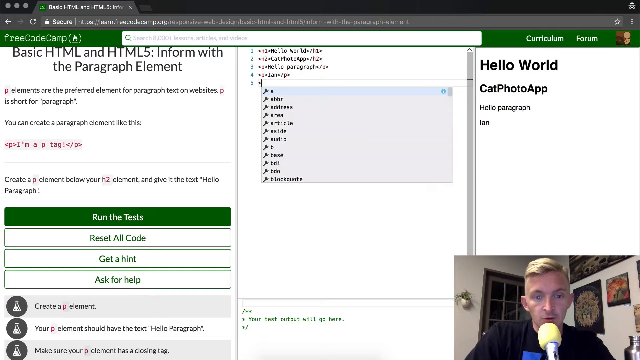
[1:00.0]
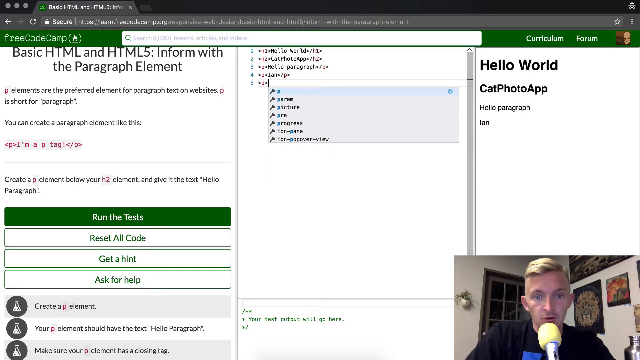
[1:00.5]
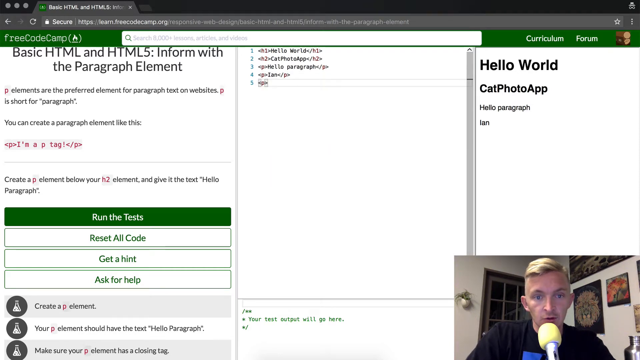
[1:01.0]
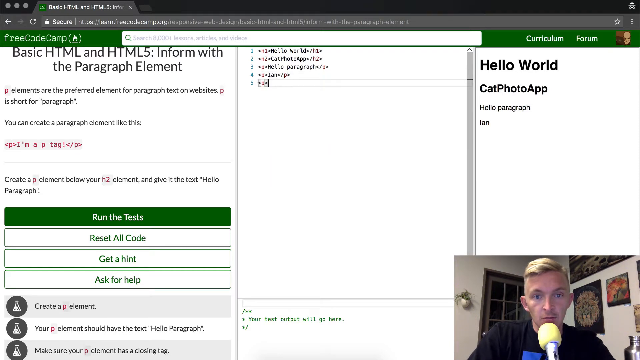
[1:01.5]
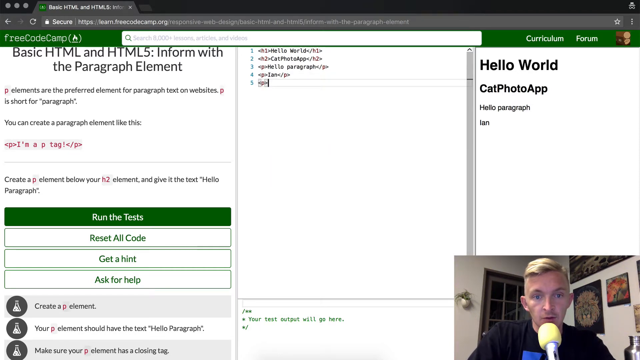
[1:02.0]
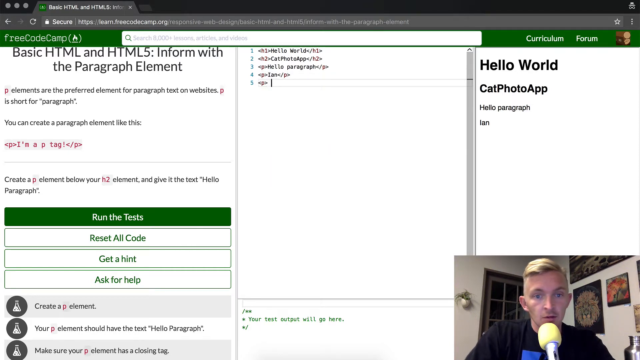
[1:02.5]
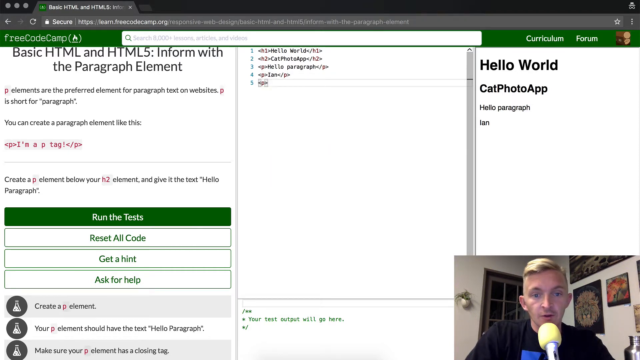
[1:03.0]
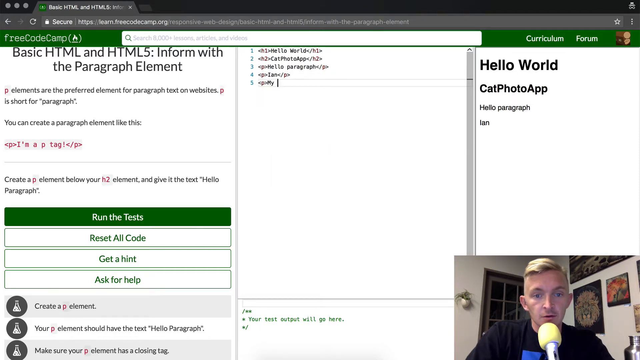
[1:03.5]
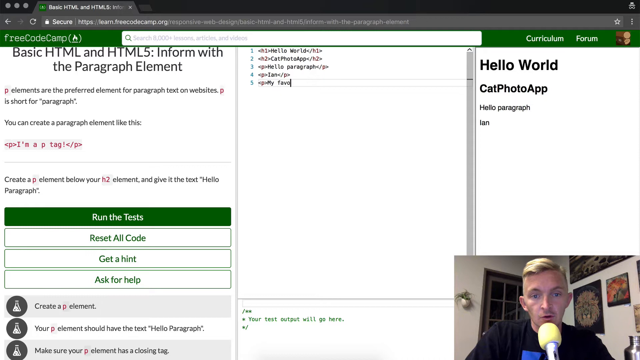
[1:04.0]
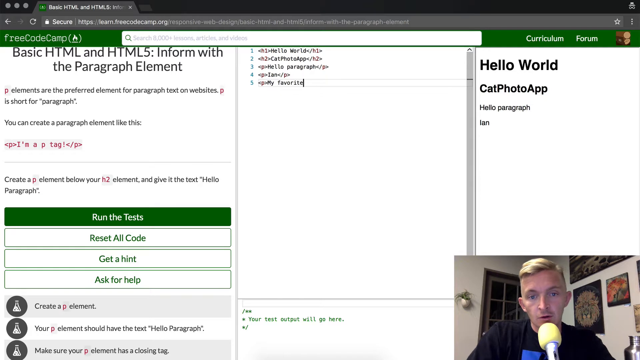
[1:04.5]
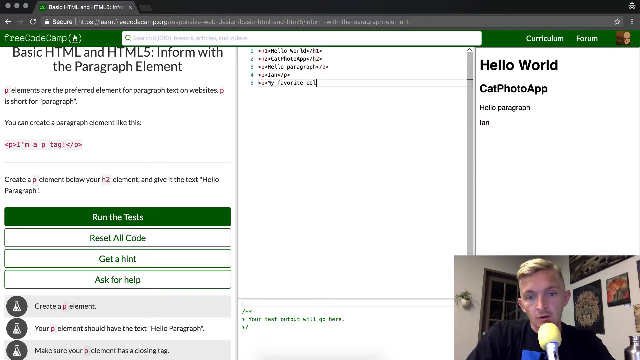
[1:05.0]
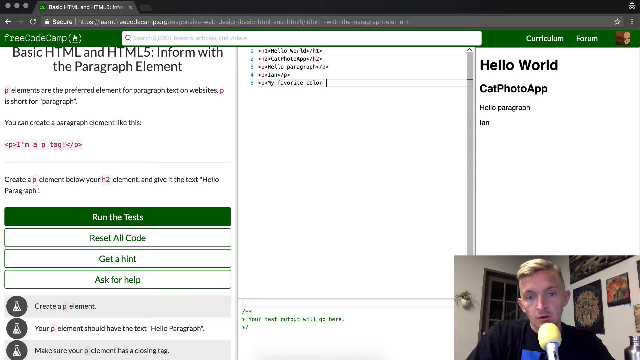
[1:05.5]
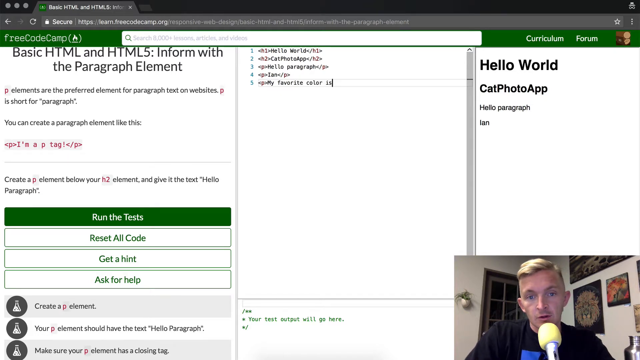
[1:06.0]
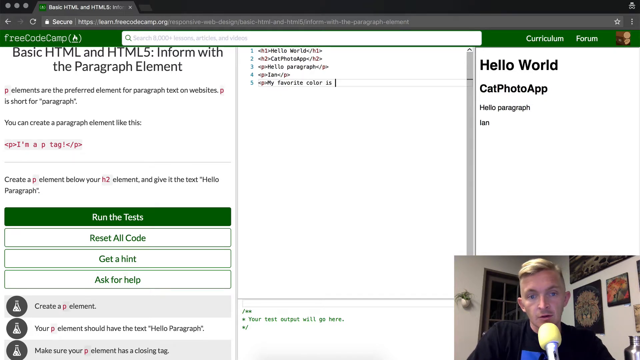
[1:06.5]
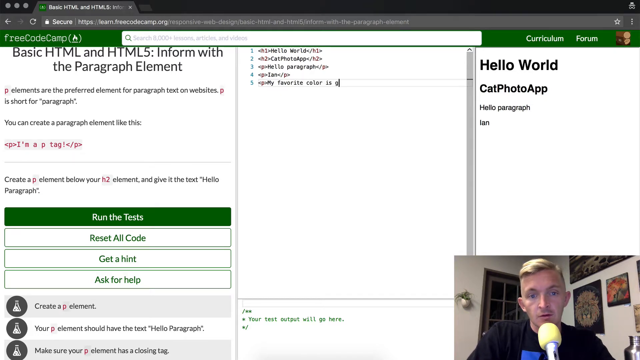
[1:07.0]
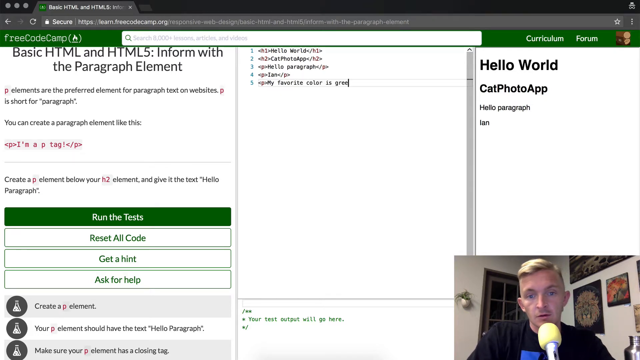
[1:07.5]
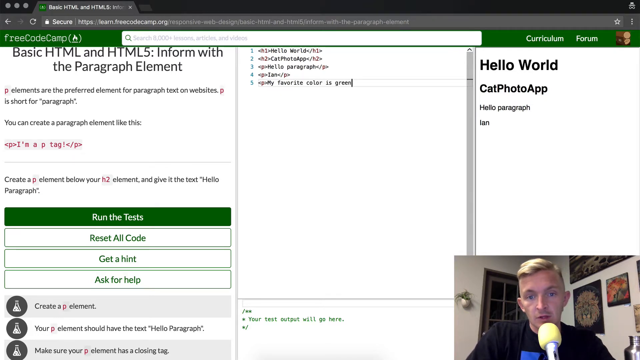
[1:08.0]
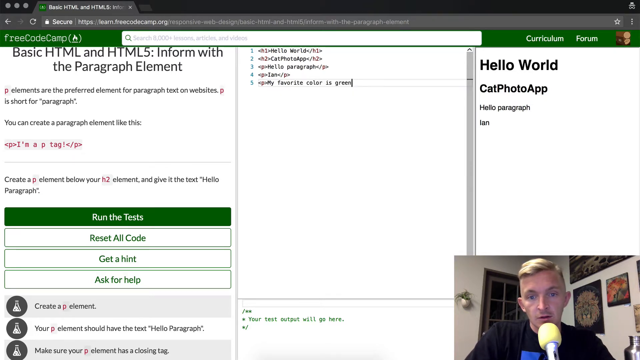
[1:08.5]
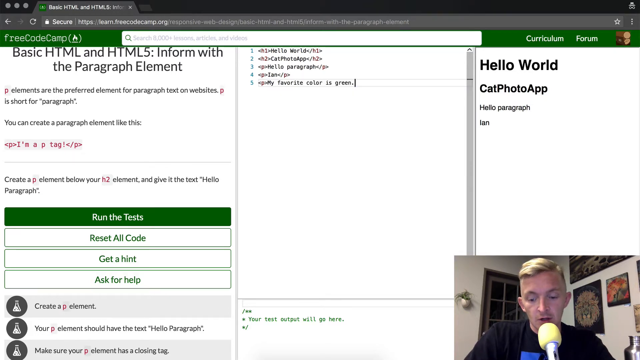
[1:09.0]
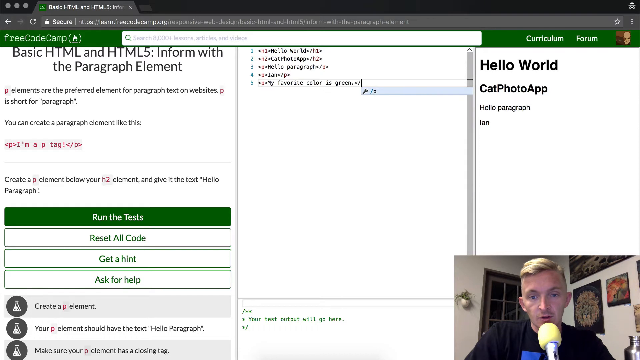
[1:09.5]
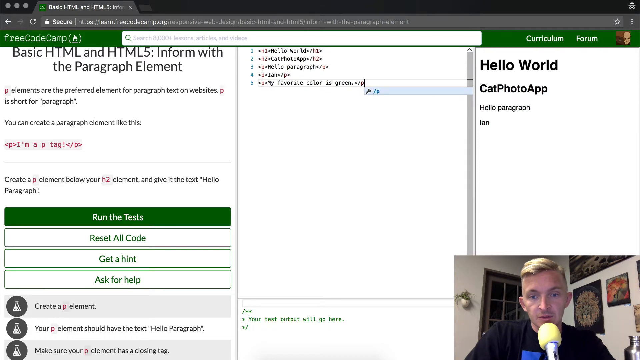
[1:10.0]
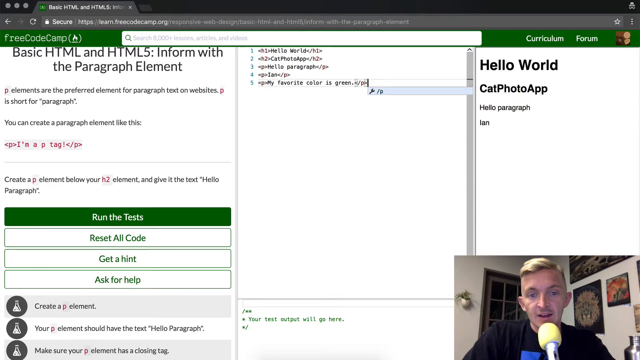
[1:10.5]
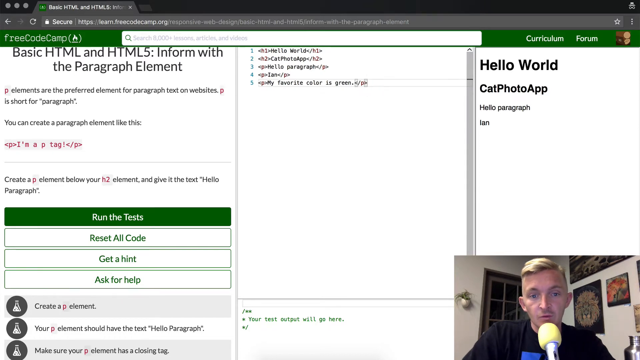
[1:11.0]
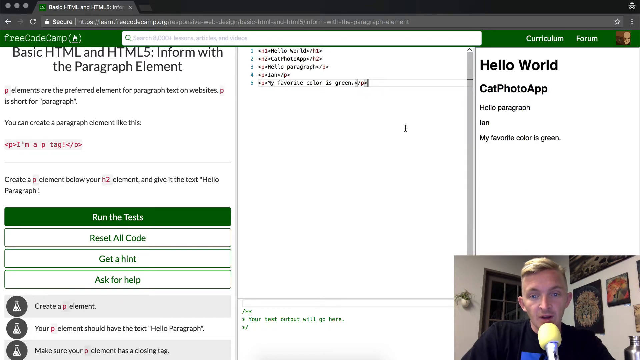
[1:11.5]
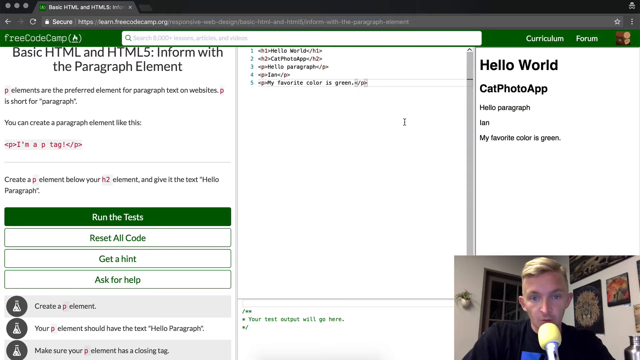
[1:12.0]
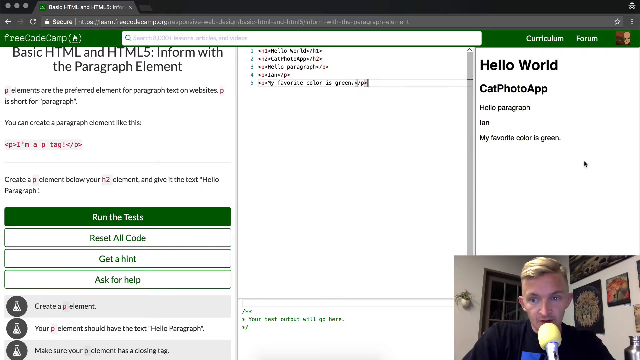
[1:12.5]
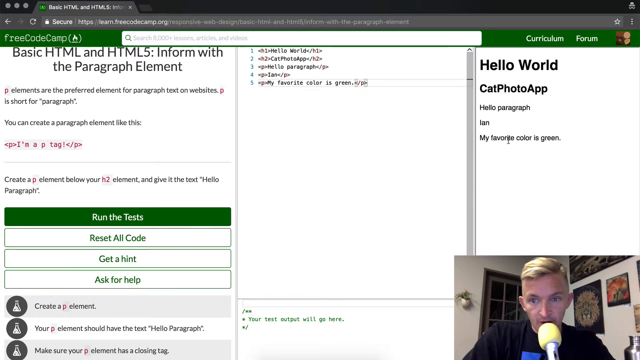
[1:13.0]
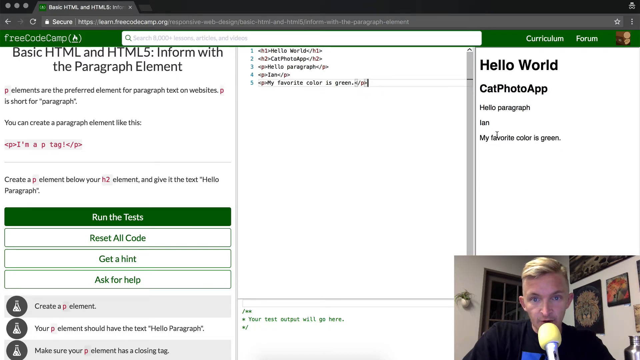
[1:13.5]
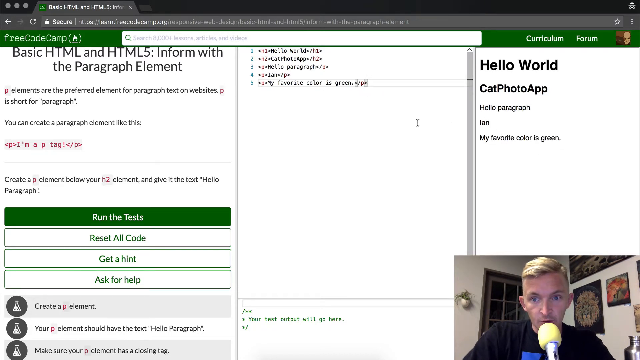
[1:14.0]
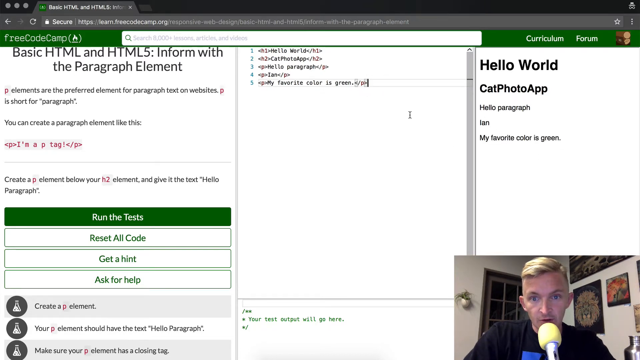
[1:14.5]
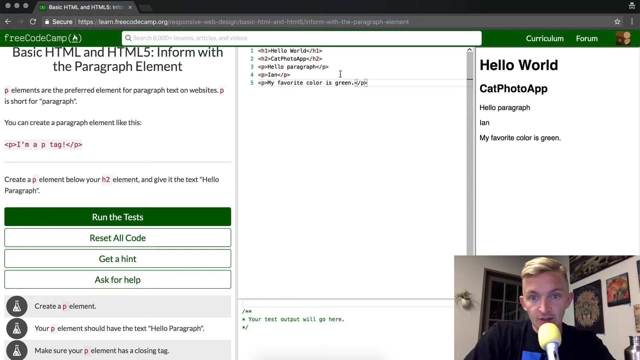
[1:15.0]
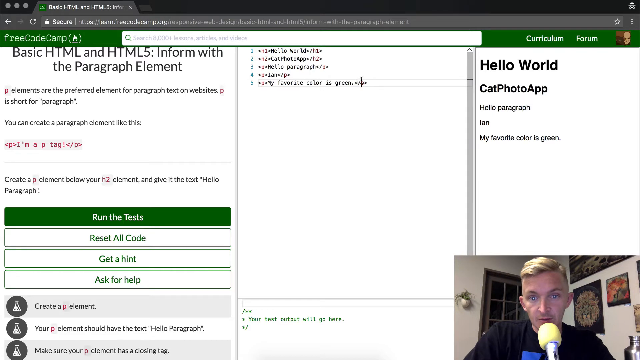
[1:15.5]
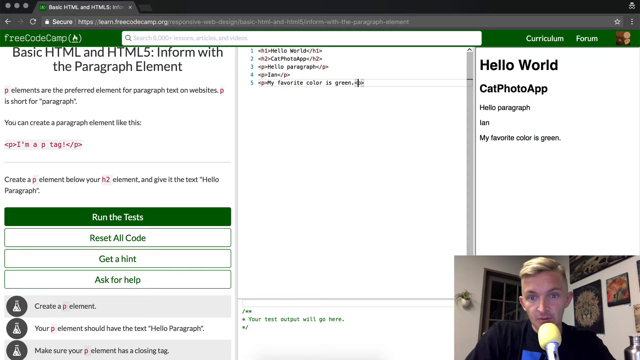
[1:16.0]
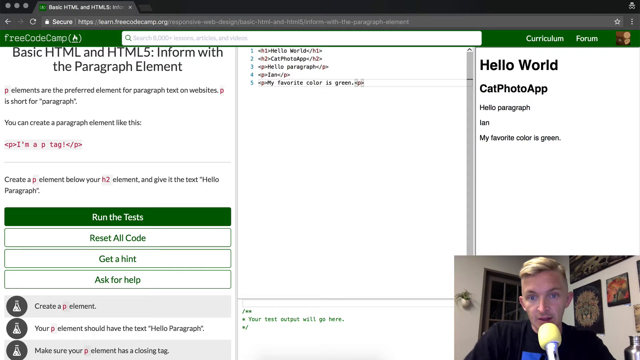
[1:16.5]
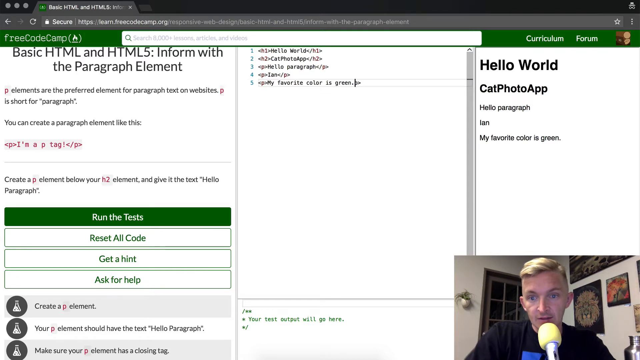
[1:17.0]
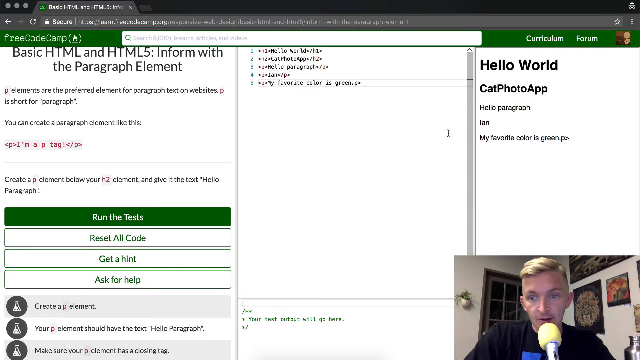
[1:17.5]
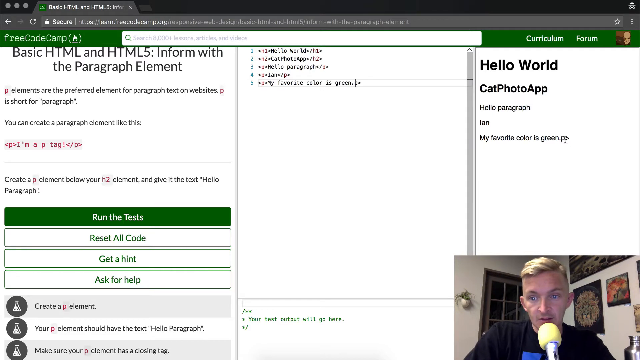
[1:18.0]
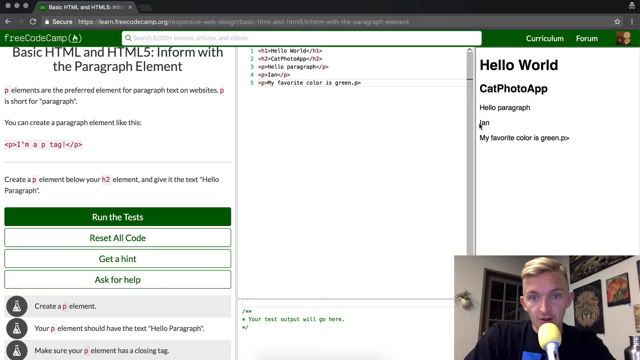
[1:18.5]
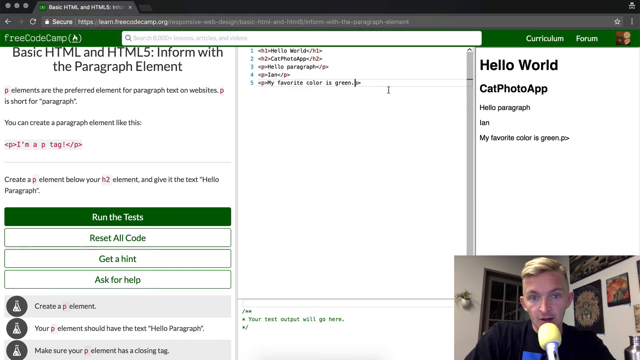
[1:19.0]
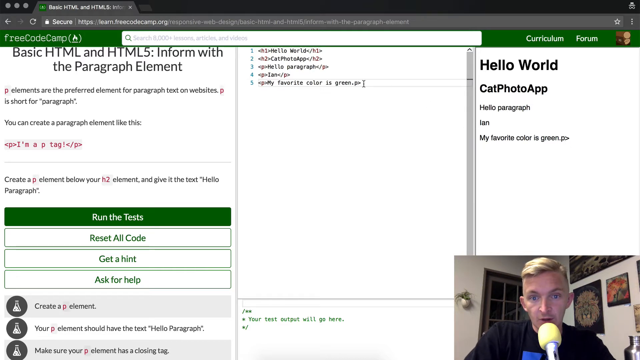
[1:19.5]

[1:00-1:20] The same white man, who looks about 30, shows the Free Code Camp webpage, where skills can be learned for free and certificates earned after finishing five courses. He seems to be typing something on the screen, and the numbers 1, 2, 3, 4 and 5 are visible. On the other side, "curriculum" and "forum" are written, along with "hello world", "chat photo app" and "hello paragraph link". He seems to be explaining how the website works and how to qualify for the courses.